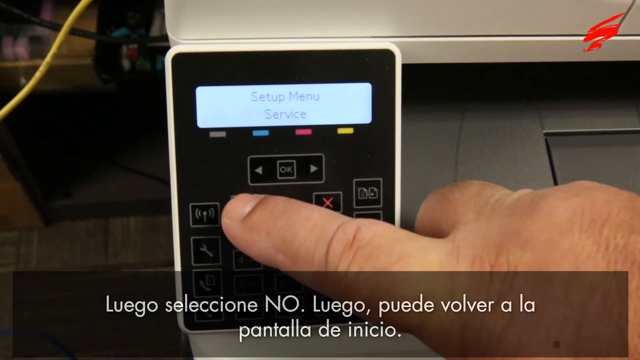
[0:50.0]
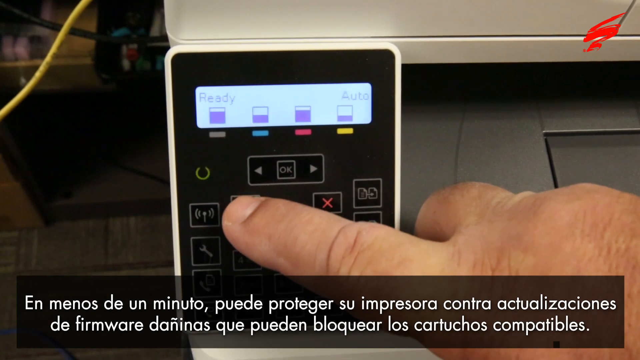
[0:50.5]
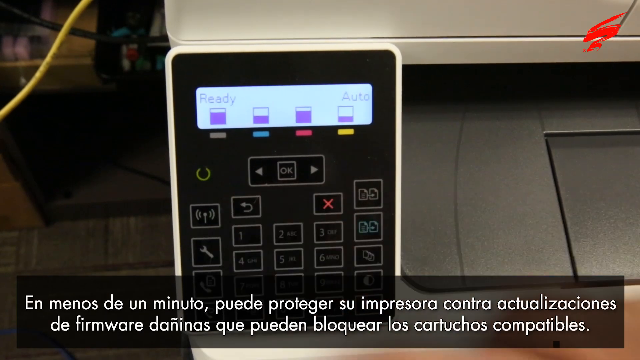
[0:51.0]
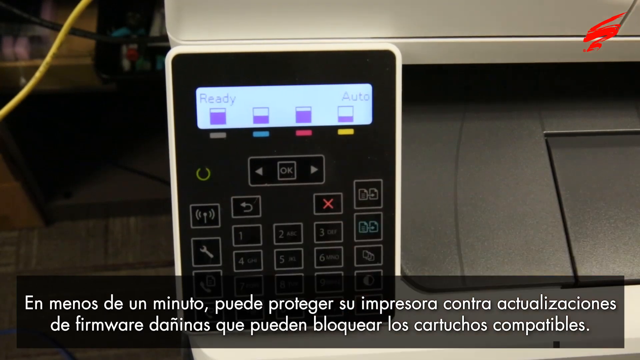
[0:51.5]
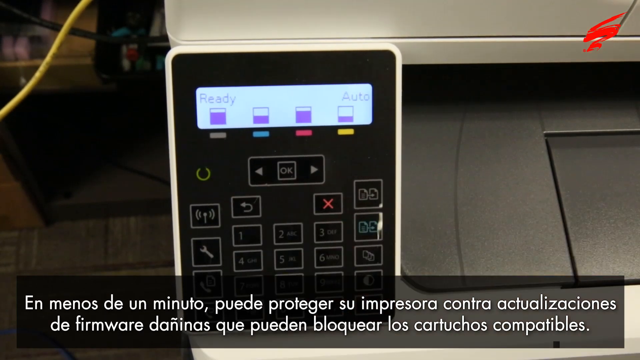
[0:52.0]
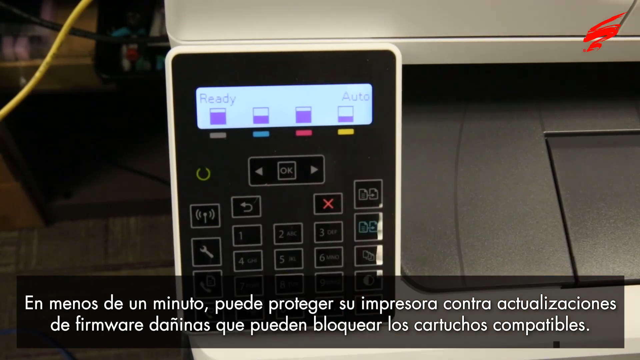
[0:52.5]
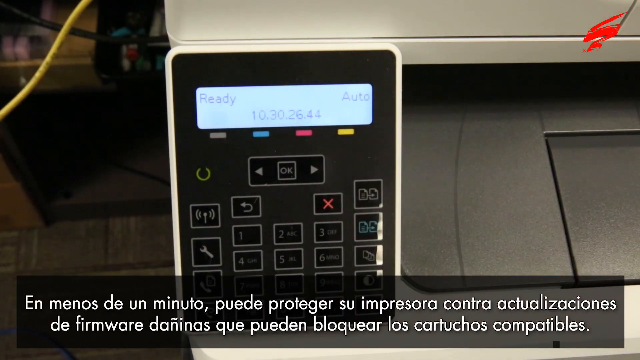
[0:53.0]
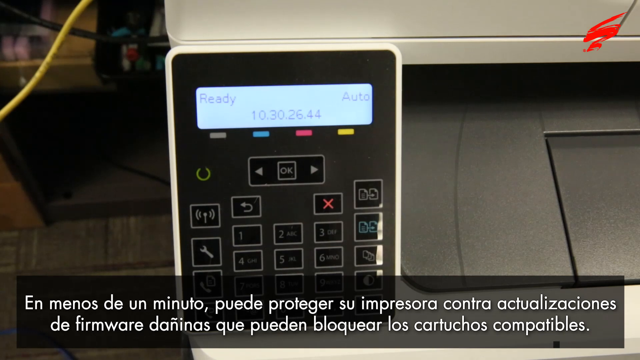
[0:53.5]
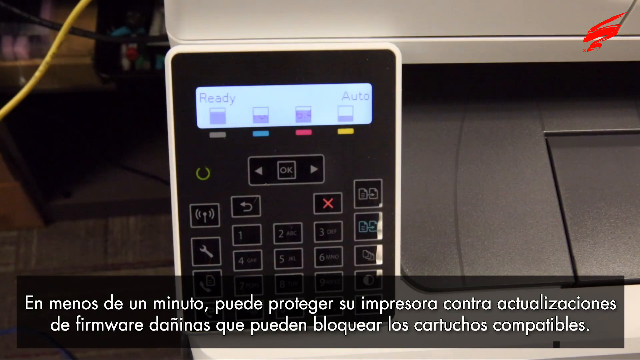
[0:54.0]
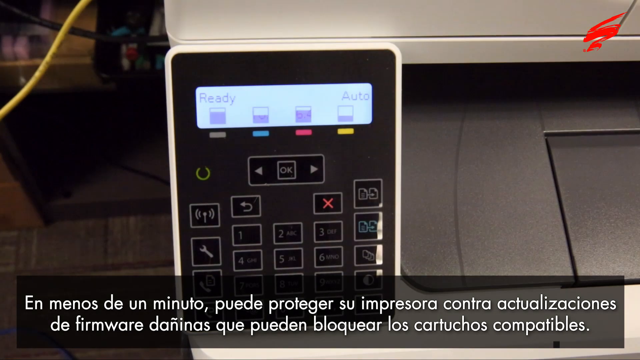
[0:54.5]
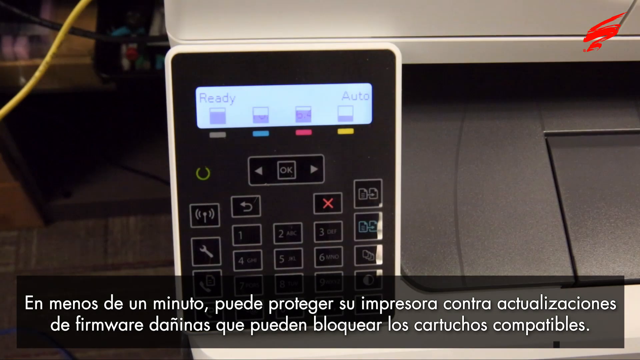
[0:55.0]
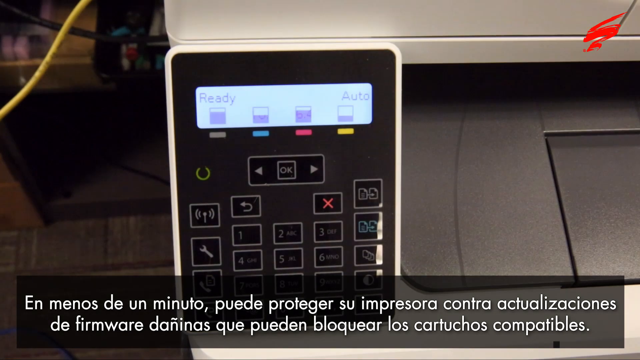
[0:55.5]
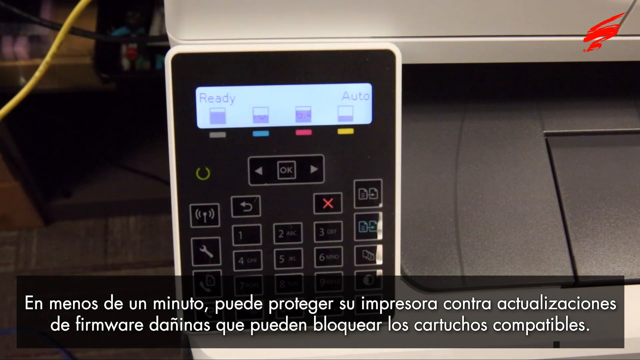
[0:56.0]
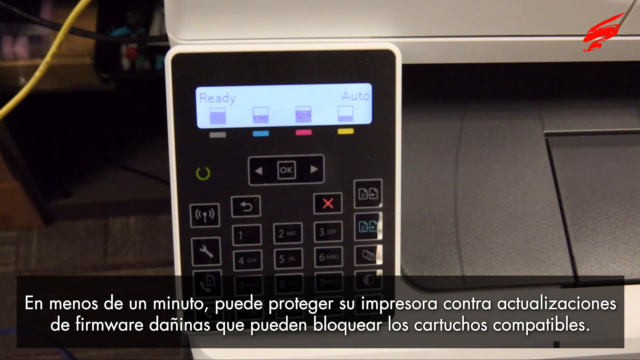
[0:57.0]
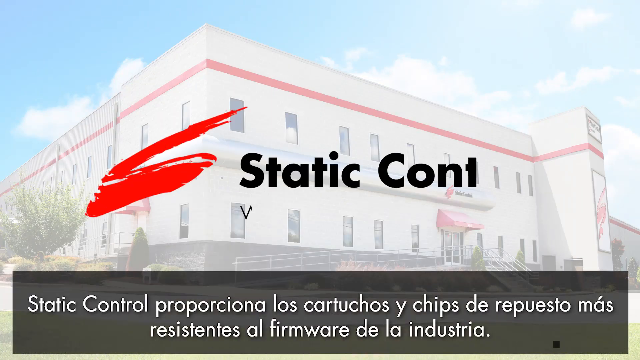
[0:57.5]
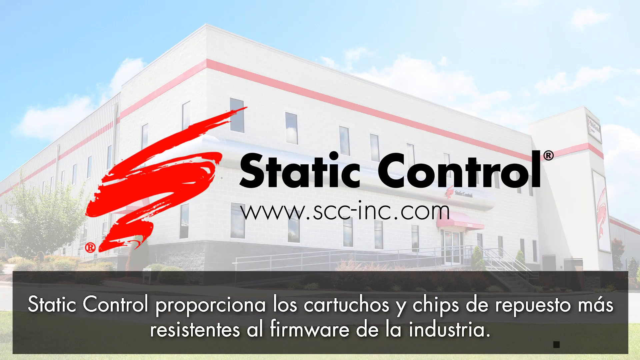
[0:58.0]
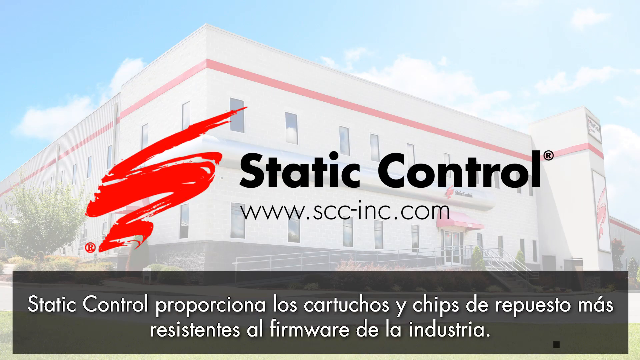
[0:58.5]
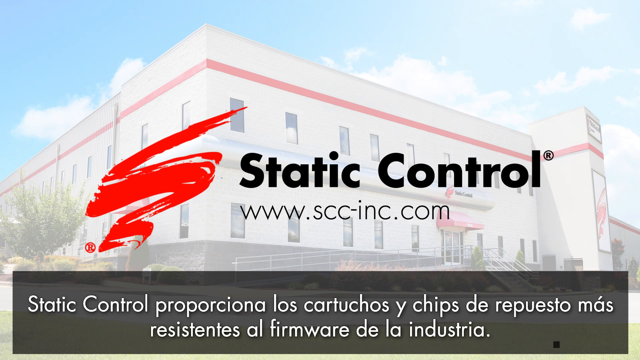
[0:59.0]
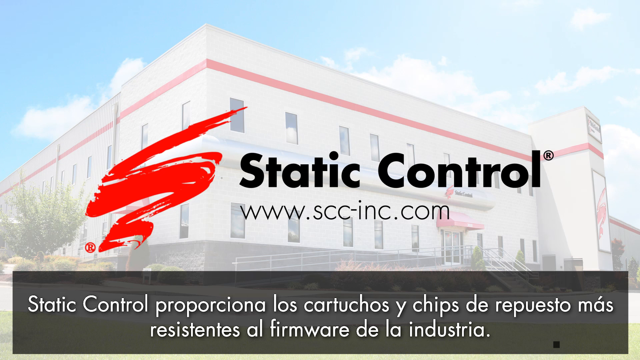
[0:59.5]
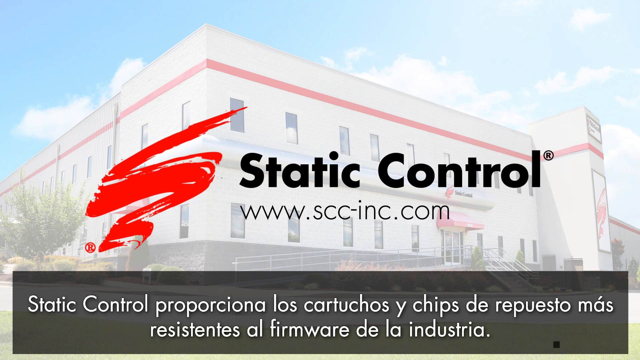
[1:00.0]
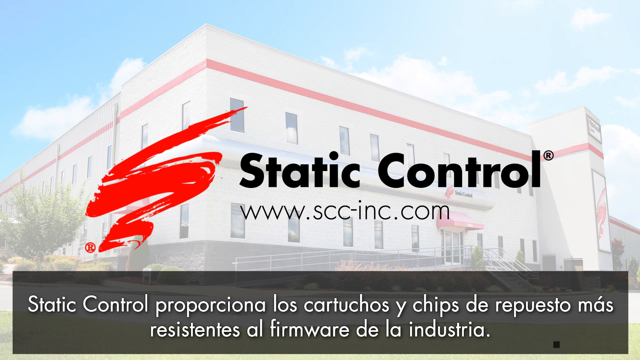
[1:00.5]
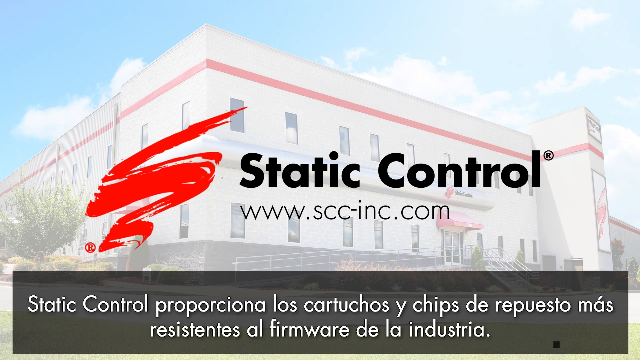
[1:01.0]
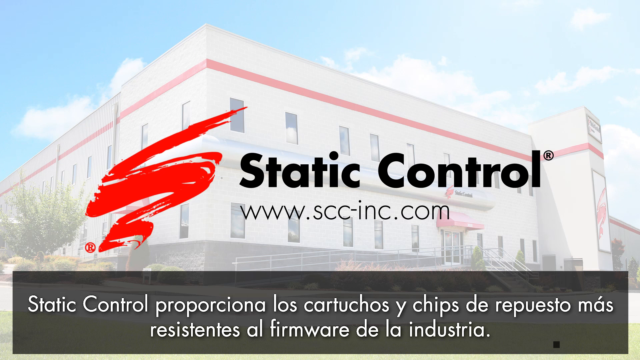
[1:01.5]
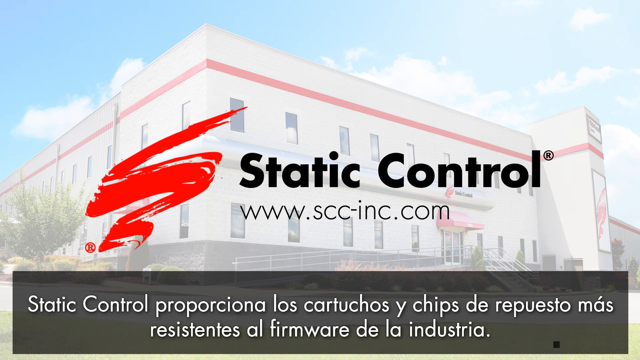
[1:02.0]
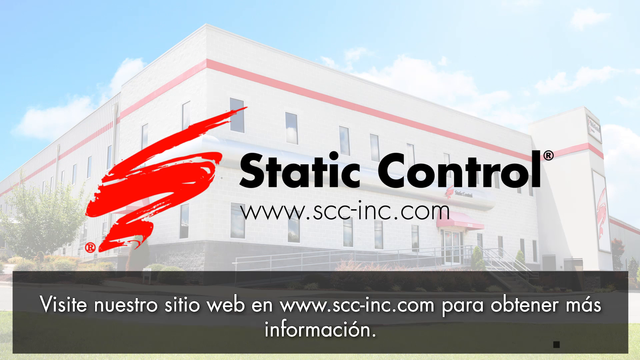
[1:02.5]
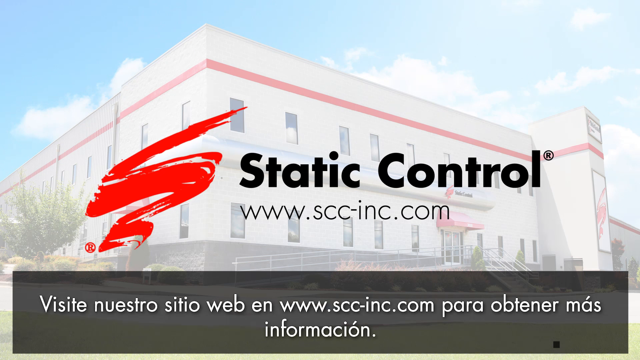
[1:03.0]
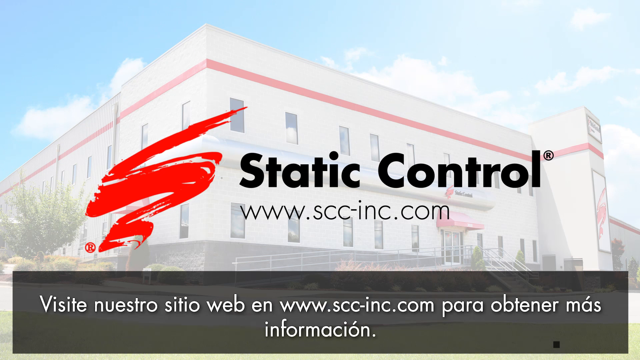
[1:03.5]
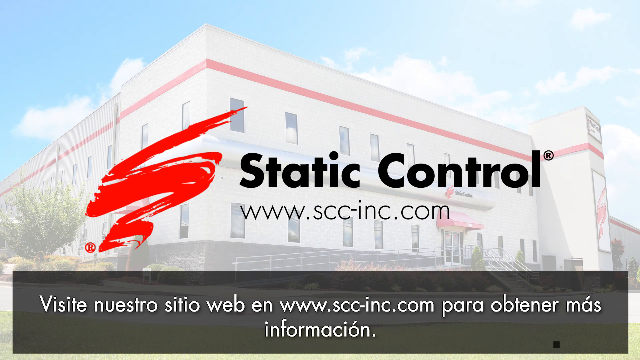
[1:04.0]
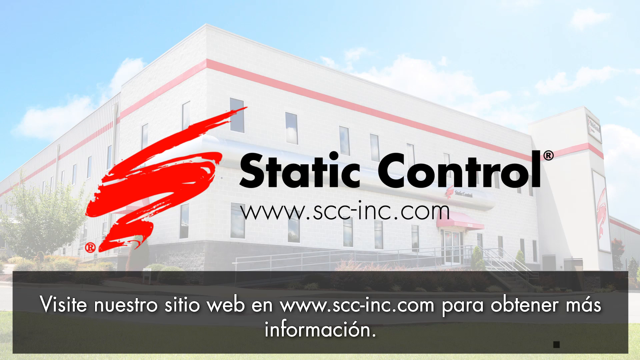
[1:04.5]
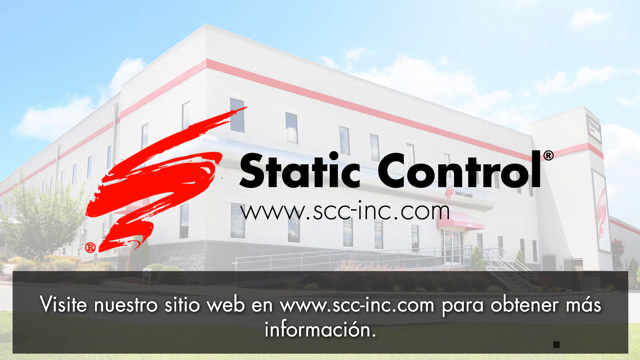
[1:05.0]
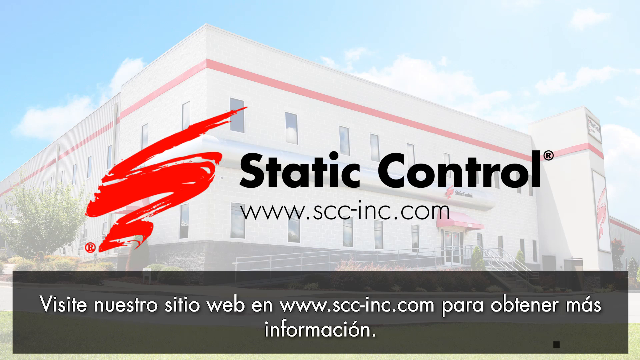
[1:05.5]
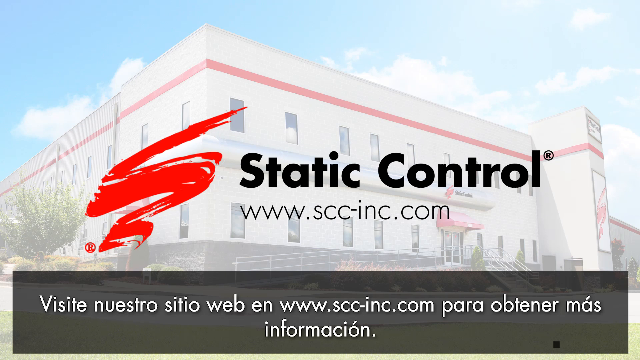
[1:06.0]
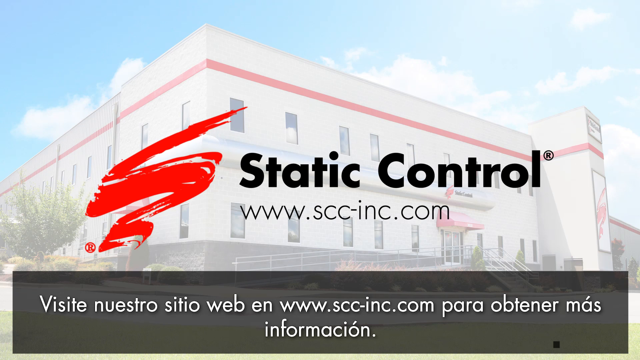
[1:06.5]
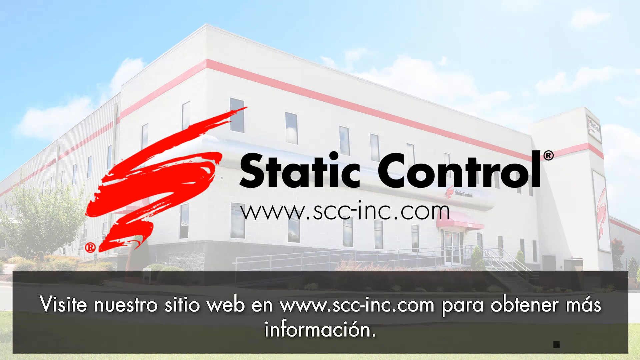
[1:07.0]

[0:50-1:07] The person continues using the device. The screen now shows "ready" at the top left and "auto" at the top right, along with four meters, or bars, filled to various degrees. The gray one is almost full, at about 75%; the red one is also at about 75%; the blue one is half full; and the far-right yellow one is almost empty, at about 25%. These possibly indicate ink levels for each color, as the device is probably some sort of printer-type machine. An end screen follows, showing the Static Control logo, a painted, streaked S, along with the website.